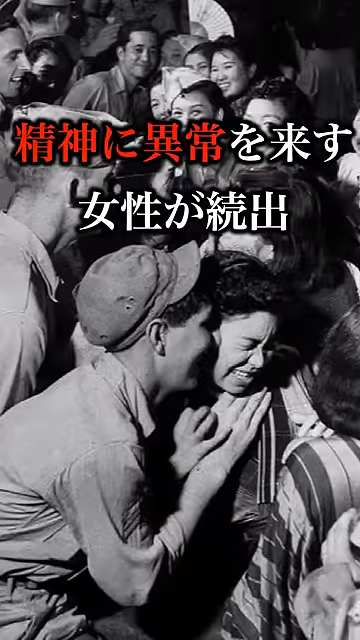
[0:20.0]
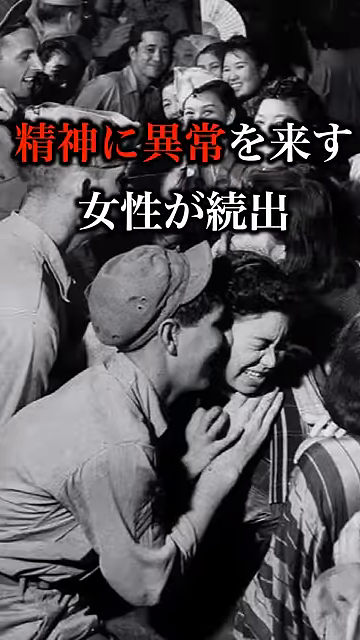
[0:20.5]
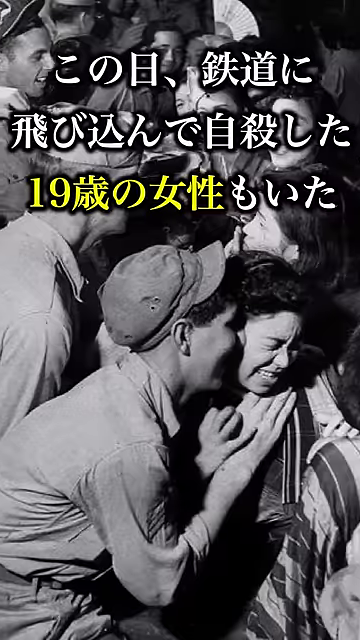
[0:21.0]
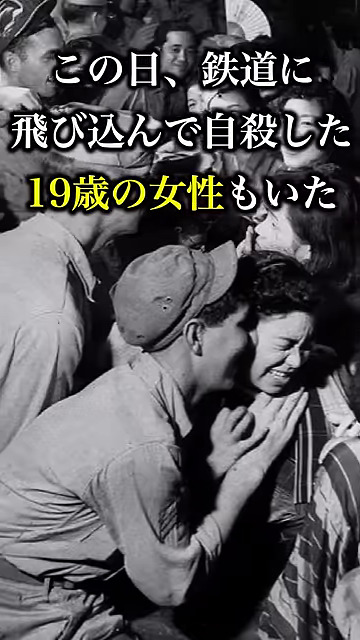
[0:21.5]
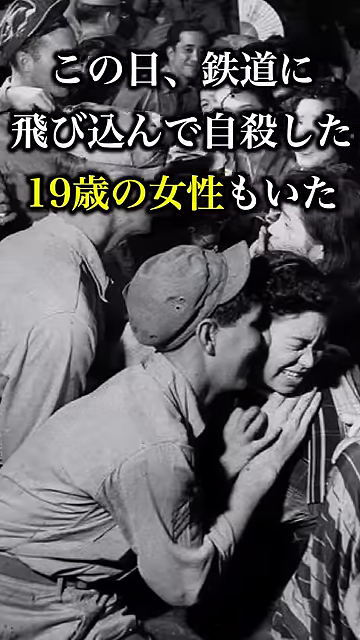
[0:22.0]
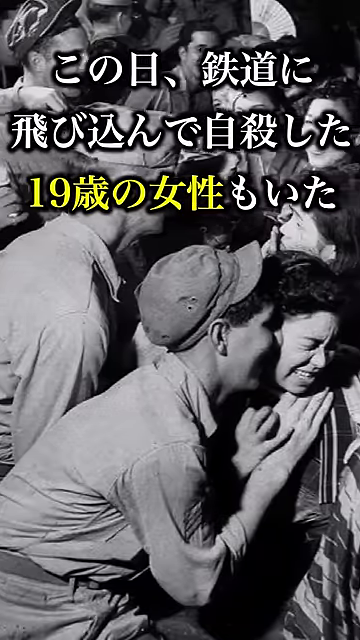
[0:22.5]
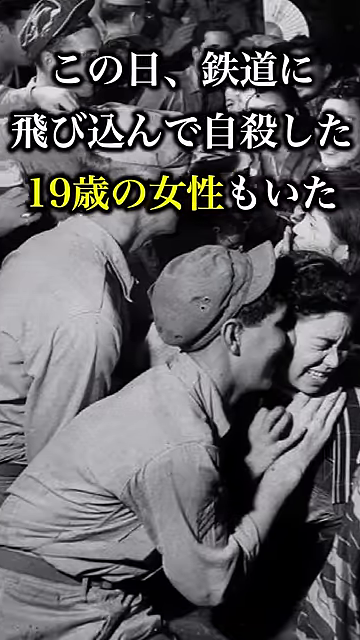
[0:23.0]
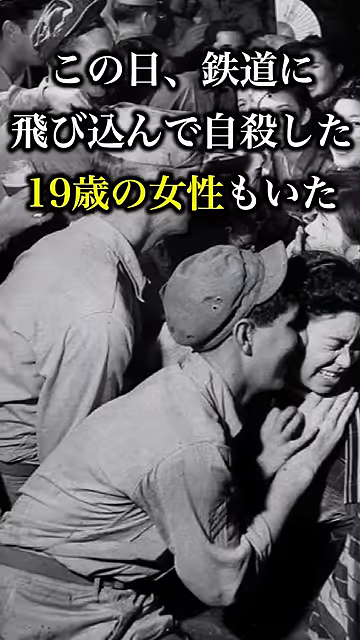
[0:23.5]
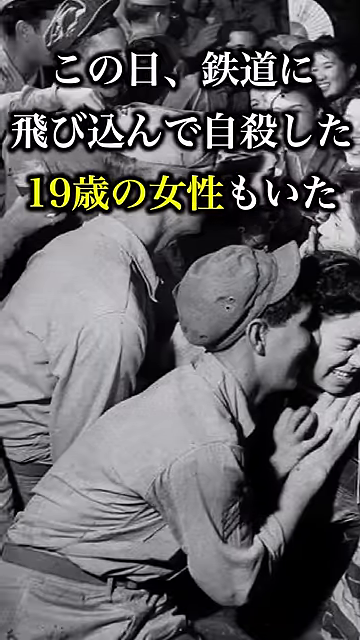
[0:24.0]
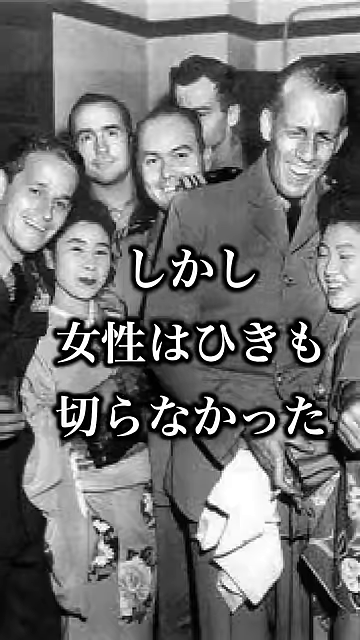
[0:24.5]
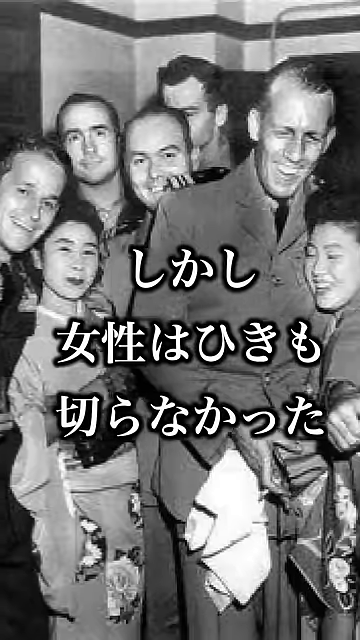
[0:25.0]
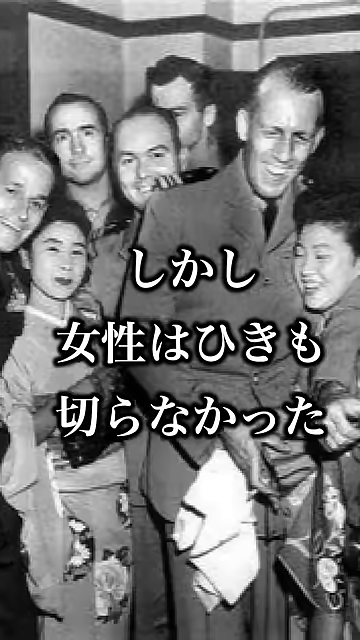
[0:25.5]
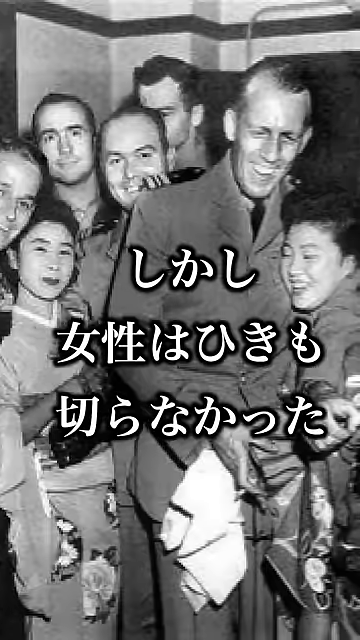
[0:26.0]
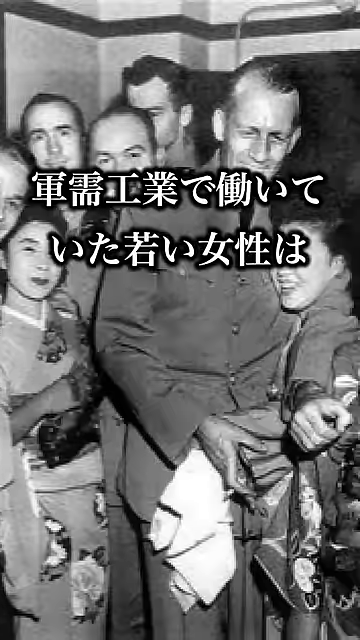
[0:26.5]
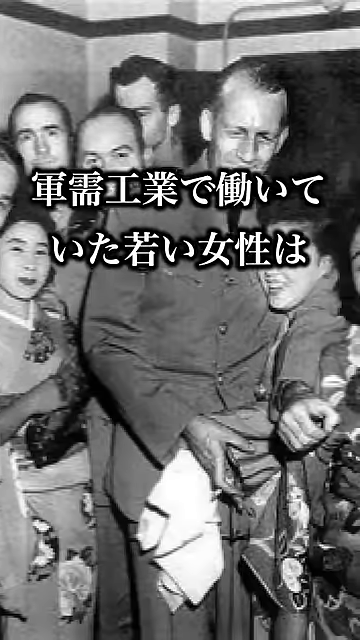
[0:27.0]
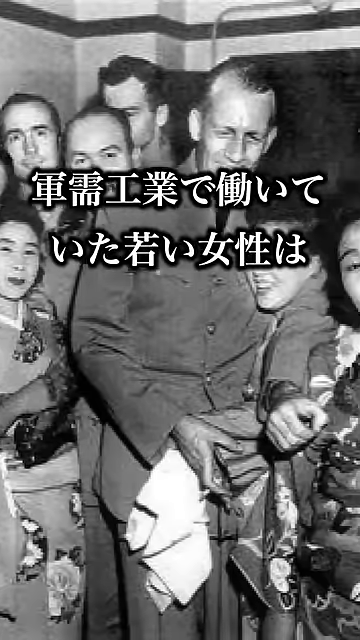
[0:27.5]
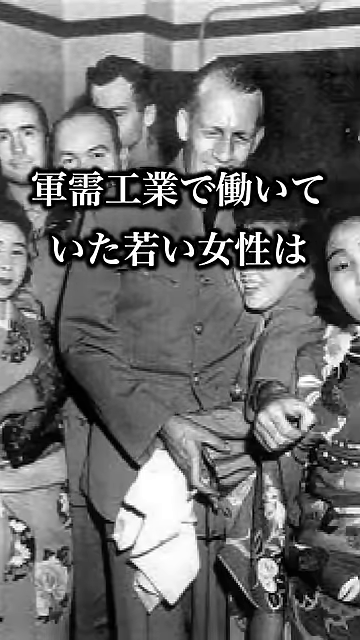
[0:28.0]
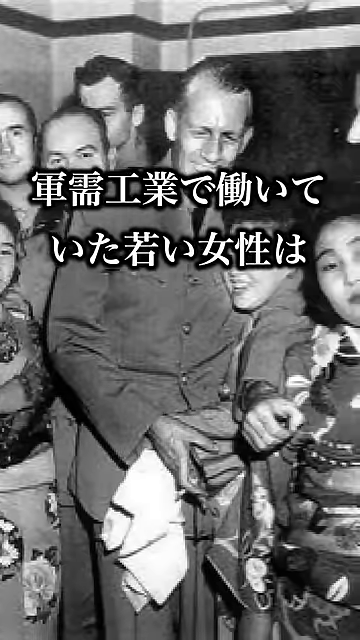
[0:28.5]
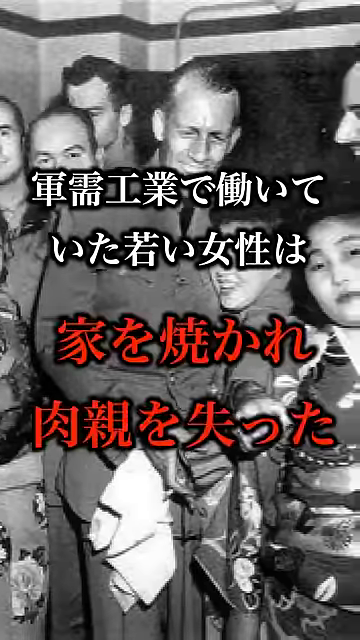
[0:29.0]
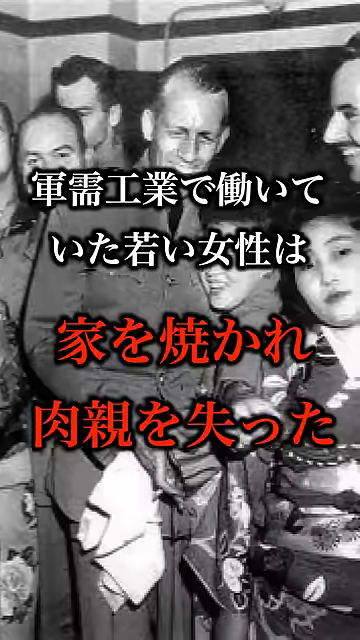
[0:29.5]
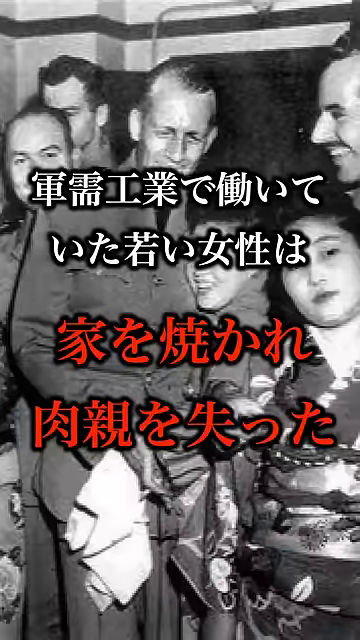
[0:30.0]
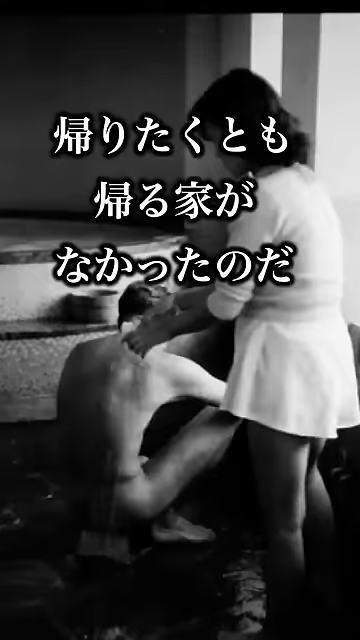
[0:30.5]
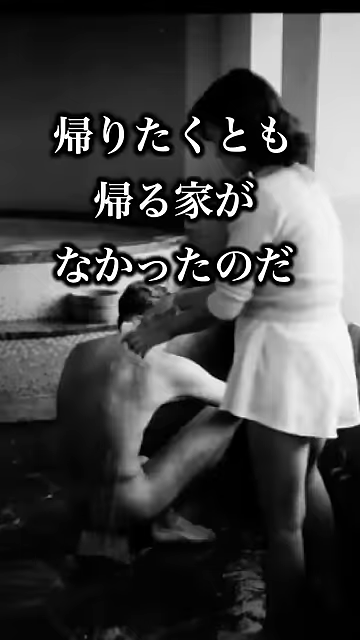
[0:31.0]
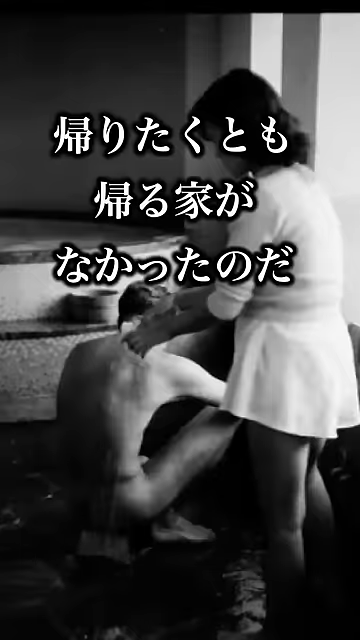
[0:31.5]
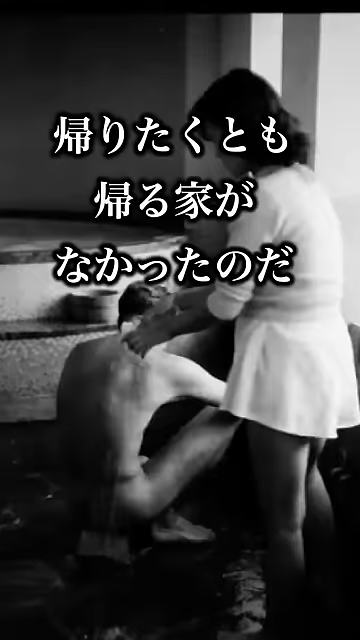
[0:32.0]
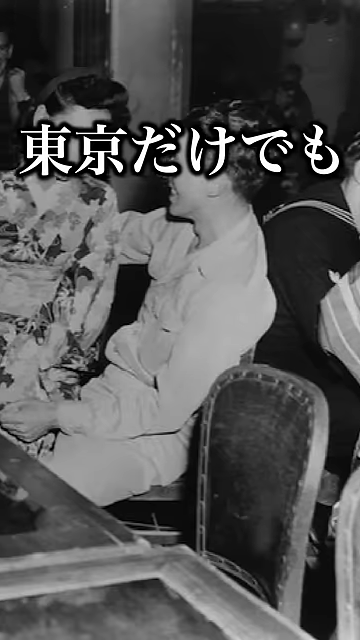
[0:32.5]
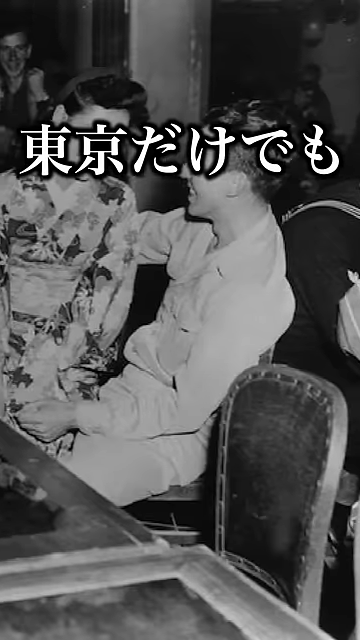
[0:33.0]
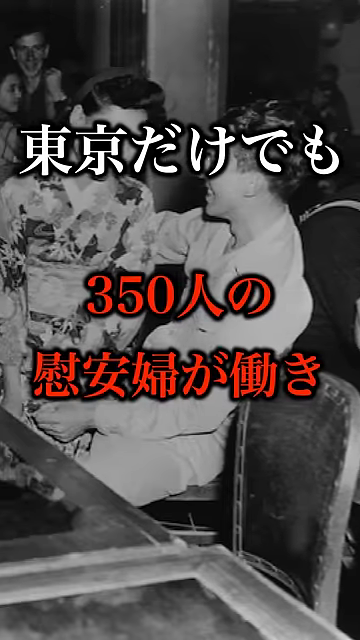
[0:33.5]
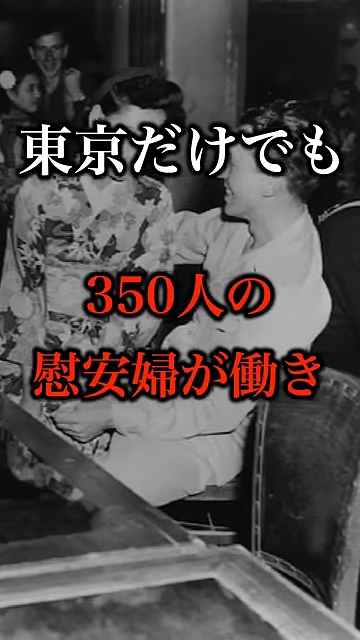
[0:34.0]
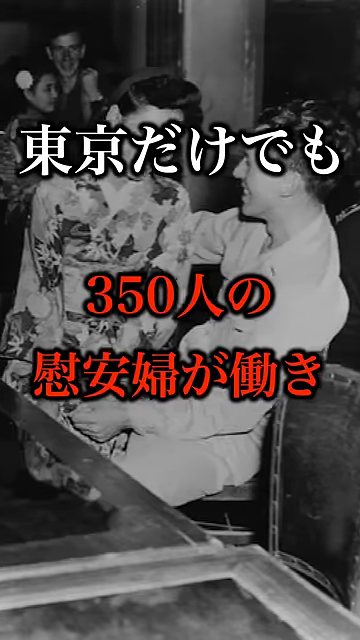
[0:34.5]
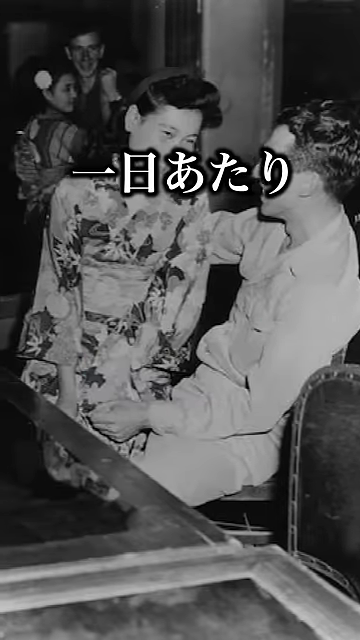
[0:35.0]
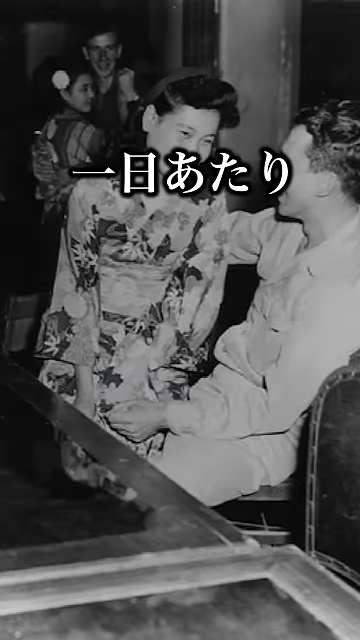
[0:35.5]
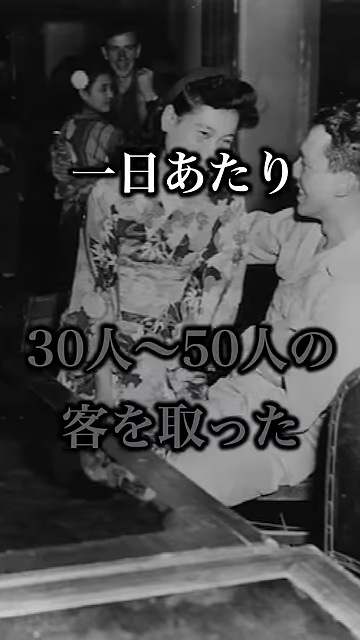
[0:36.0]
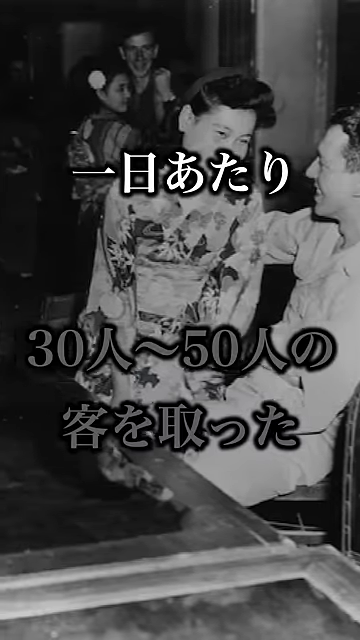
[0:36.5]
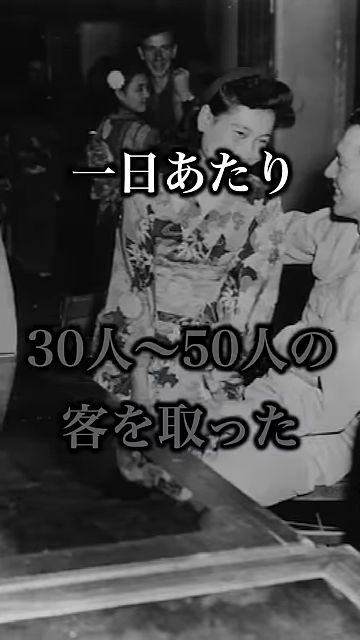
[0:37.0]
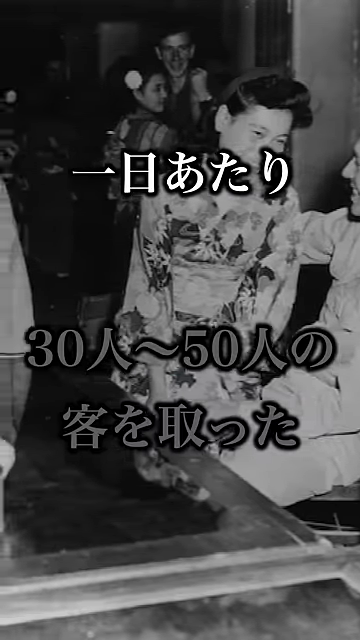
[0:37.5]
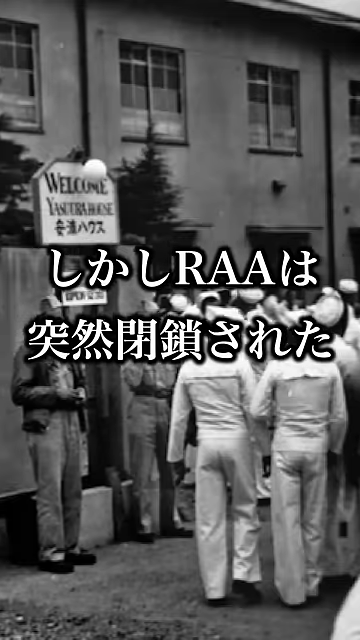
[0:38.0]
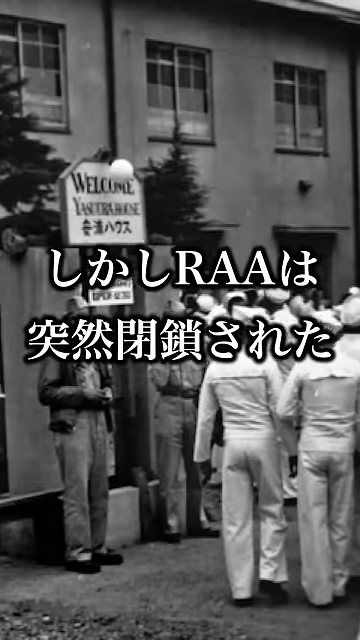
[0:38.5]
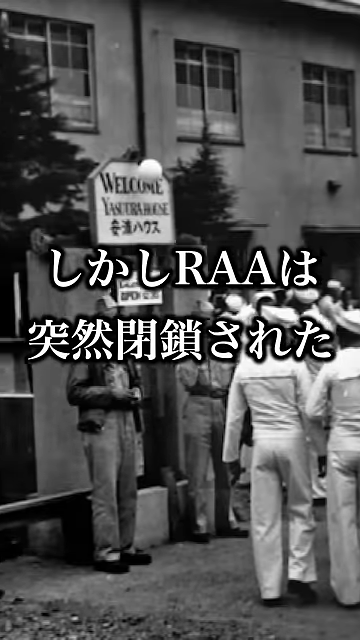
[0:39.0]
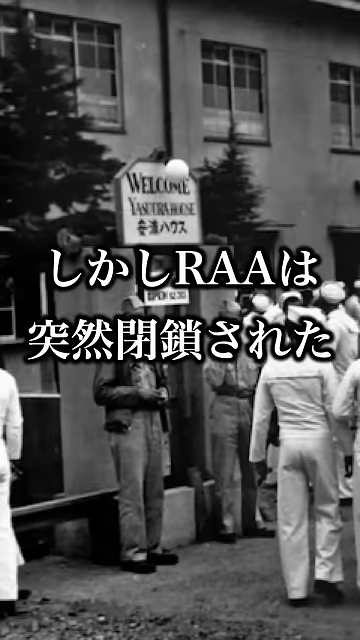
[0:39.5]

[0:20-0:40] Fathers kiss their sons, and other family members take what seem to be last pictures together. Medical inspections take place in different scenes. The video is a series of still pictures flashing from scene to scene, usually with at least five people in each, though some have one to two. In the scenes of couples, a few are smiling and happy, but most look down and forlorn. Some of the big group pictures are like families grouped together, while others show crowds of people outside. The medical inspection looks to be a guy crouched down while some type of nurses kind of inspect his skin and hair.